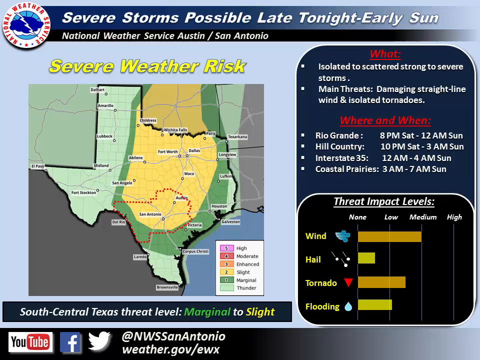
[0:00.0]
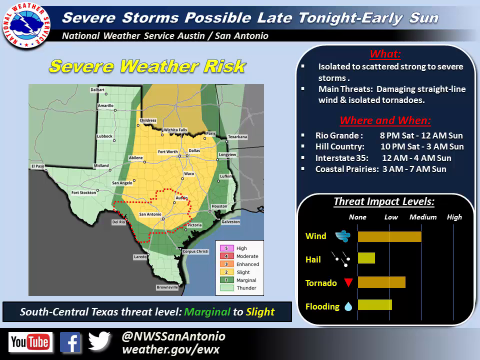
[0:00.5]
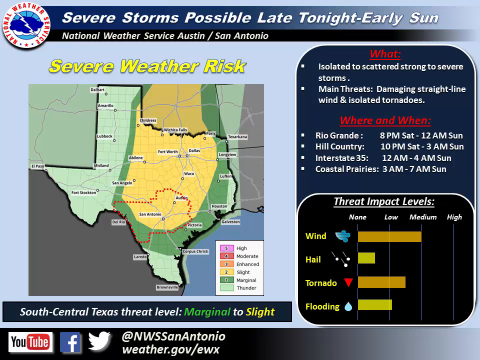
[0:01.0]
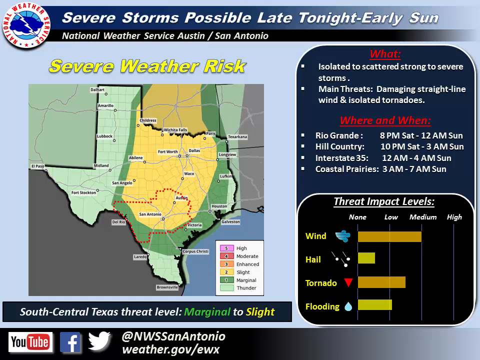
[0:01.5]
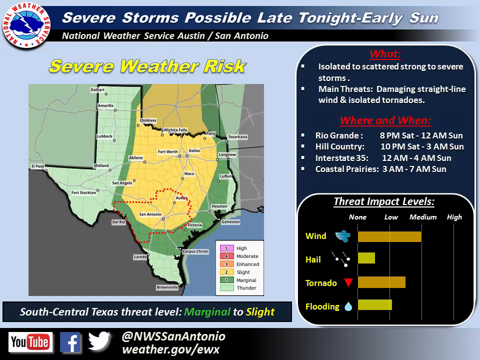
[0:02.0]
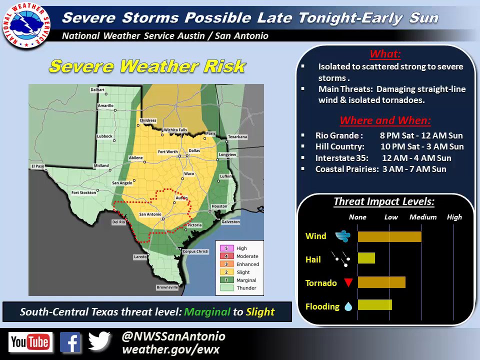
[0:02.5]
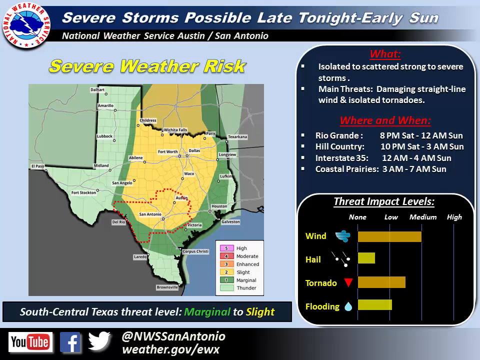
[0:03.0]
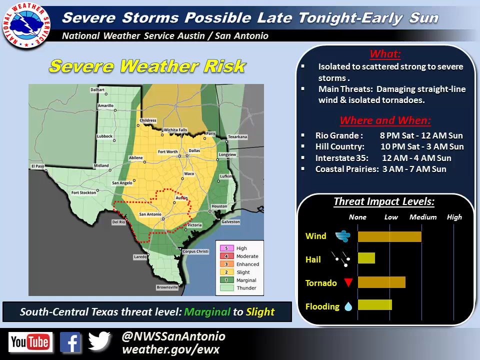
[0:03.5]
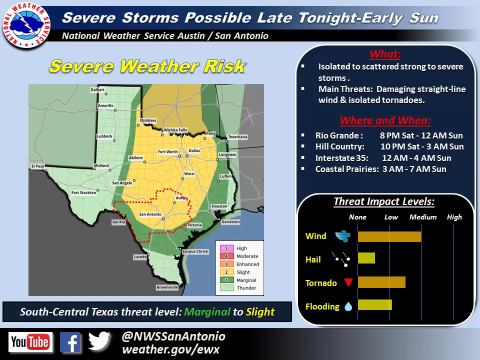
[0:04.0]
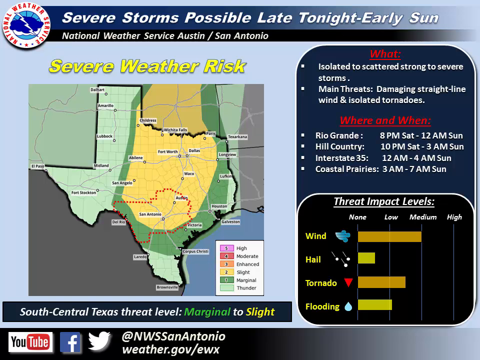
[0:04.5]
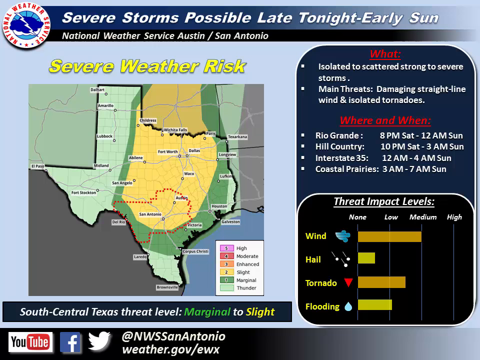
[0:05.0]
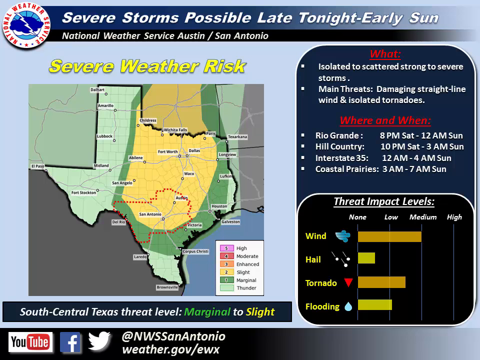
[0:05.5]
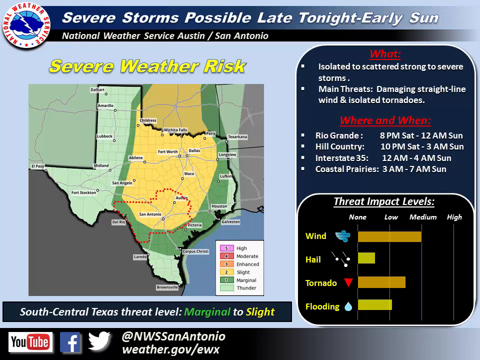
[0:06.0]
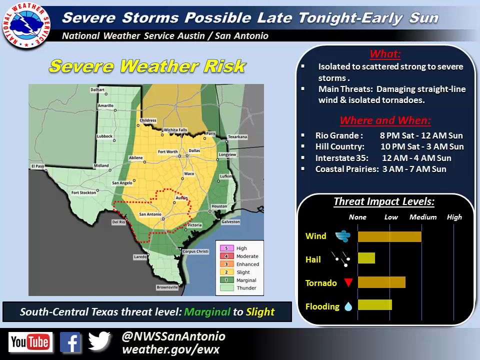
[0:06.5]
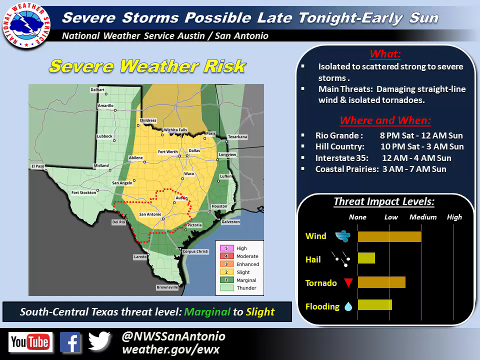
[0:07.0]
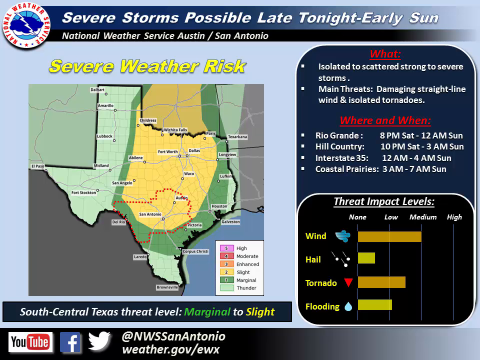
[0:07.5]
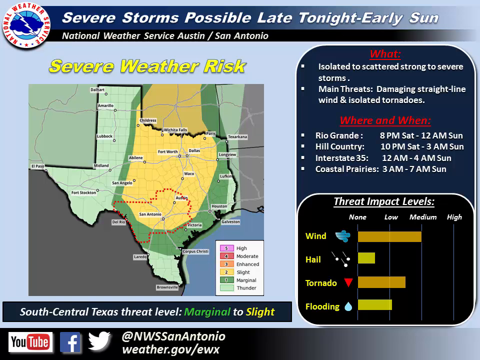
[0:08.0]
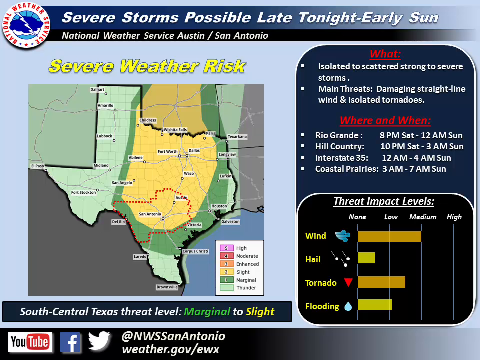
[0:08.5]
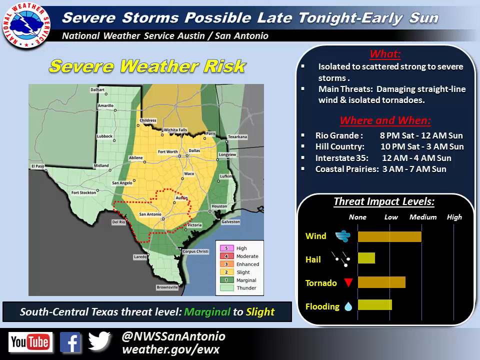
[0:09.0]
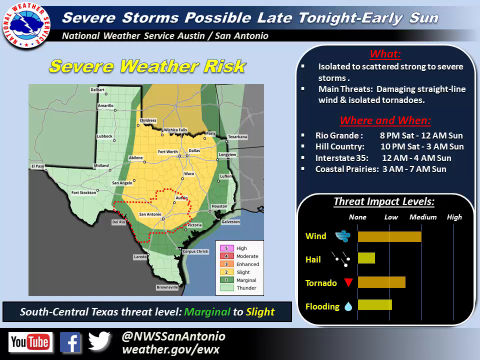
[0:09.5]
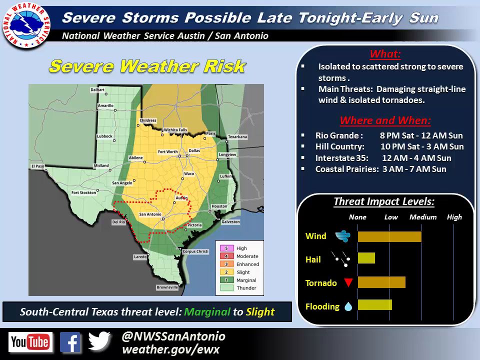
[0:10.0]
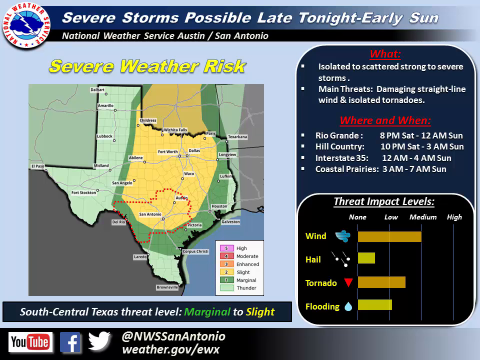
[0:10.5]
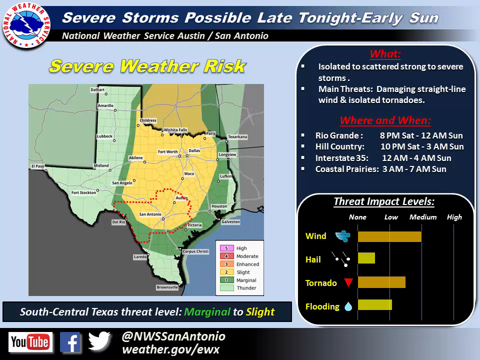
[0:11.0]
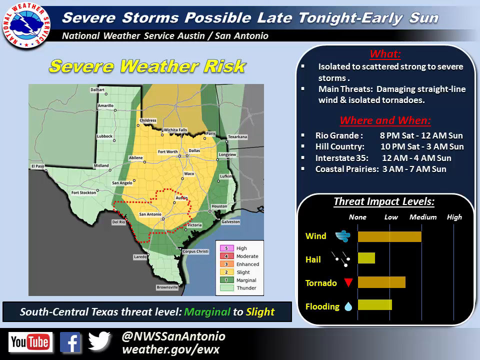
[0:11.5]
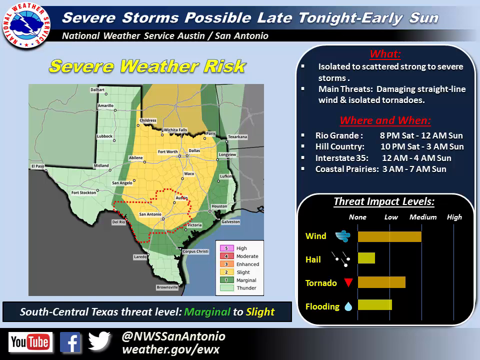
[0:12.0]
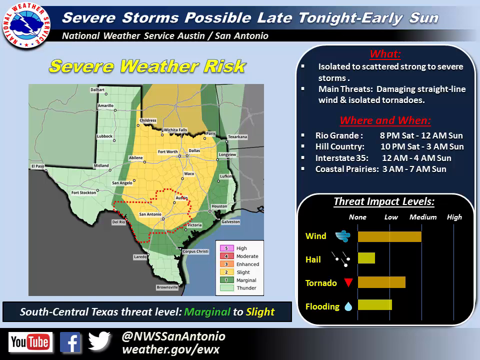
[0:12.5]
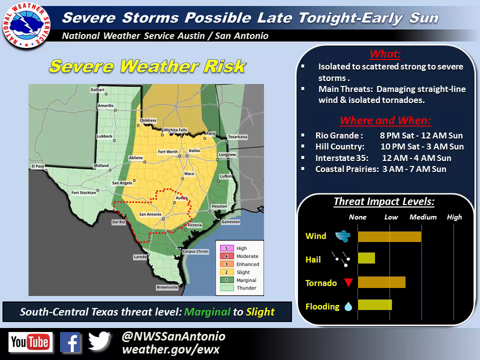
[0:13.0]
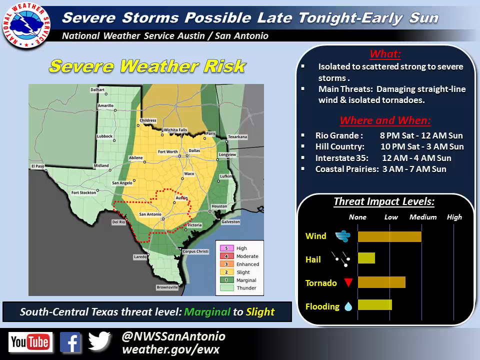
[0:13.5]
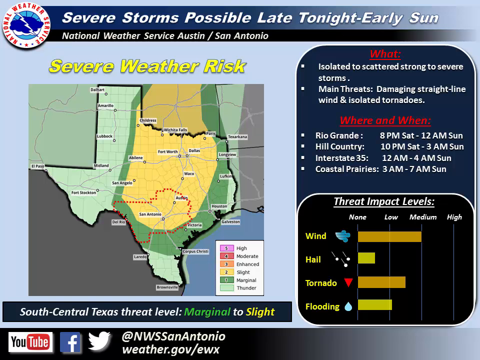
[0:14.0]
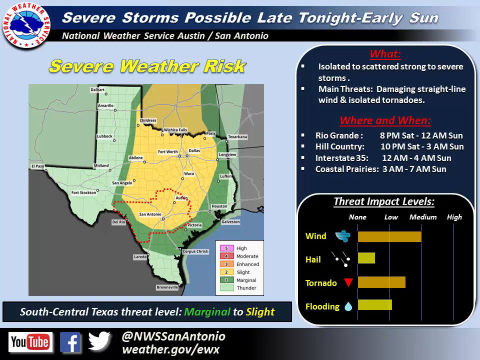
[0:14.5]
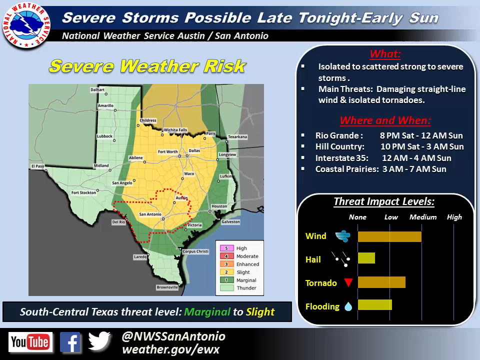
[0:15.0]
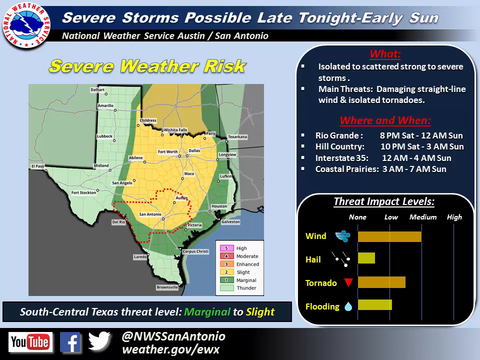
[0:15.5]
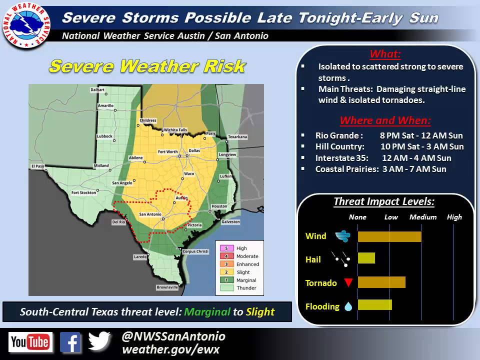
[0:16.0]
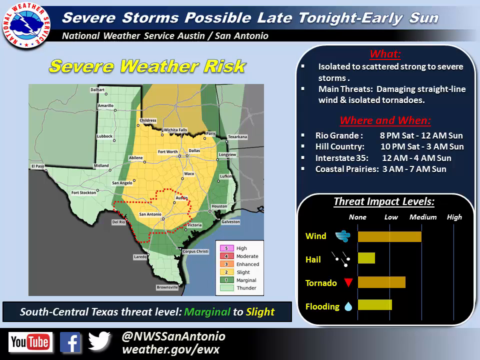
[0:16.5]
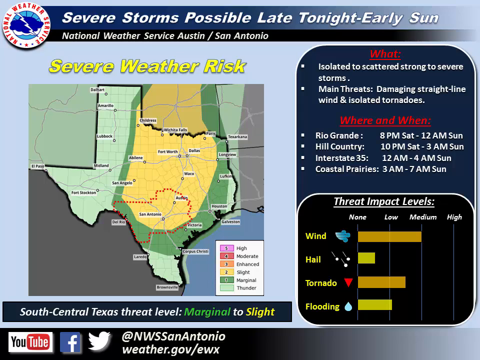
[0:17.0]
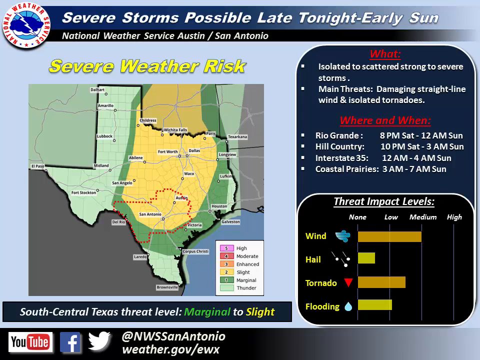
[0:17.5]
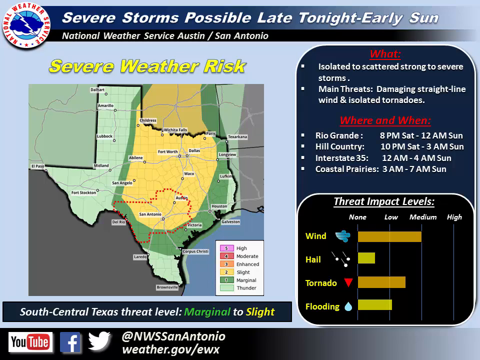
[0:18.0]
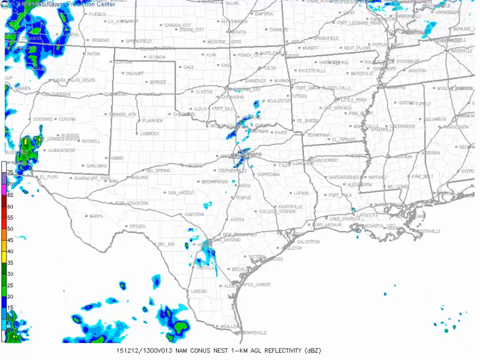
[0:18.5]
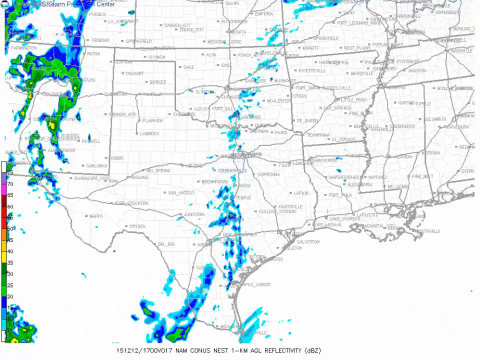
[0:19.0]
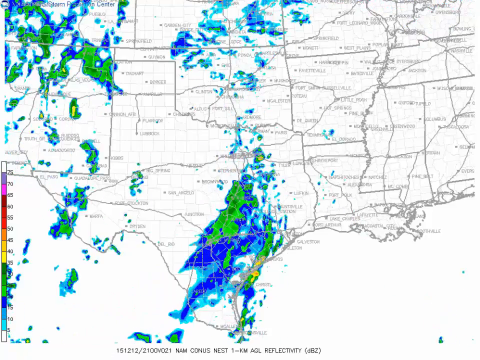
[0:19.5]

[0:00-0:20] A YouTube channel displays the heading "Severe storms possible late tonight, early" along with a map headed "severe weather risk". The channel is called National Weather Service Austin/San Antonio. The map has different color shades: green, light green, yellow, some red dots, black and grey. On the right side of the screen is a phone shape containing the question "what" in red, answered below by bullets: "Isolated to scattered strong to severe storms" and "main threats damaging straight line, wind and isolated tornadoes". Further questions, "where" and "when", are also answered with bullets: "Rio Grande 8pm Saturday to 12am Sunday", a second entry for "10pm Saturday to 3am Sunday", "Interstate 35" at "12am to 4am Sunday", and "coastal prairies" at "3am to 7am". Below that, a rectangle with curved corners reads "threat impact levels" above a bar chart recording the impact levels of the storm.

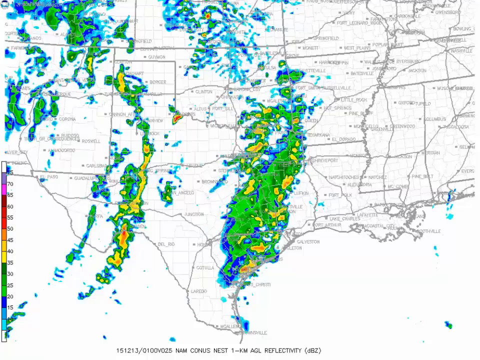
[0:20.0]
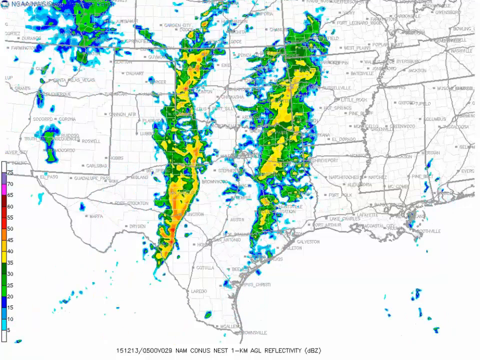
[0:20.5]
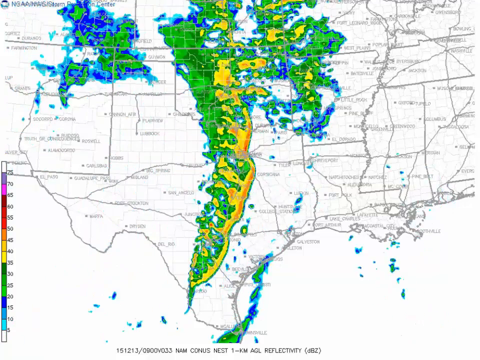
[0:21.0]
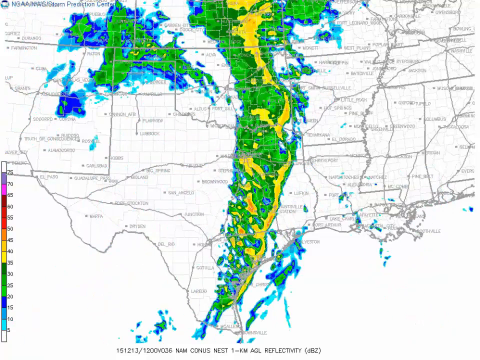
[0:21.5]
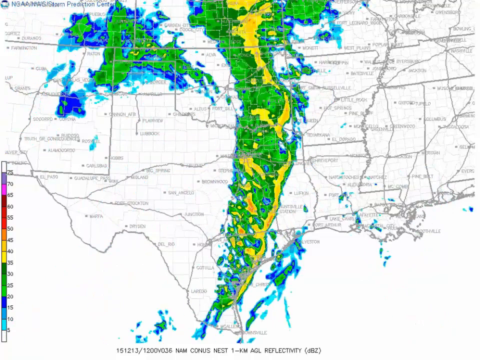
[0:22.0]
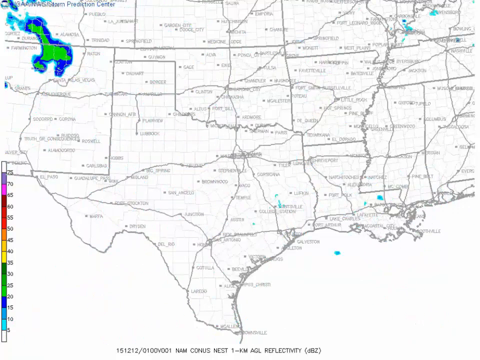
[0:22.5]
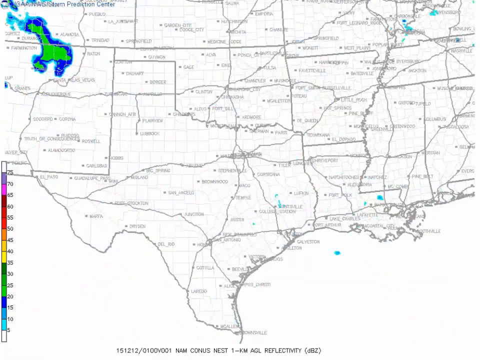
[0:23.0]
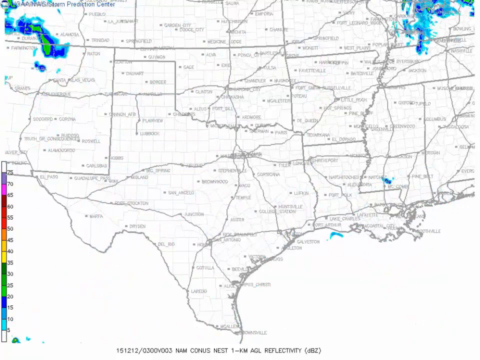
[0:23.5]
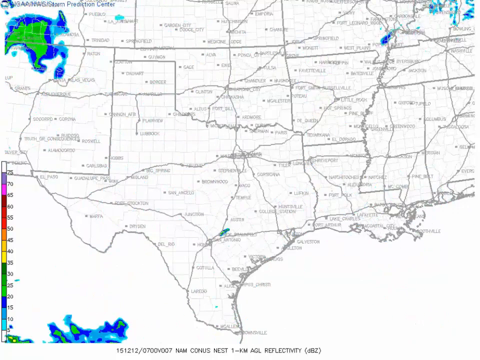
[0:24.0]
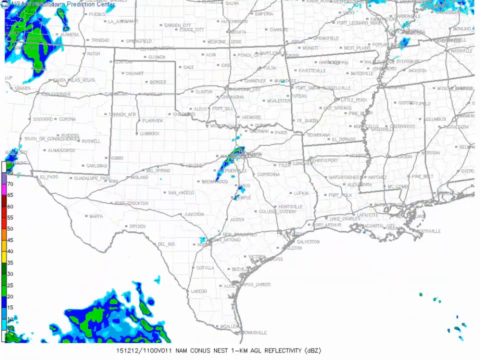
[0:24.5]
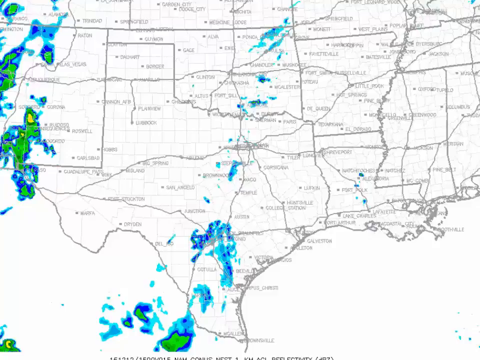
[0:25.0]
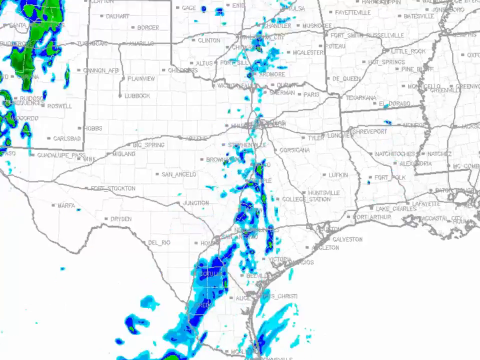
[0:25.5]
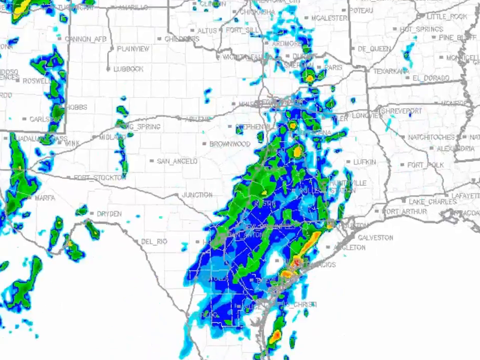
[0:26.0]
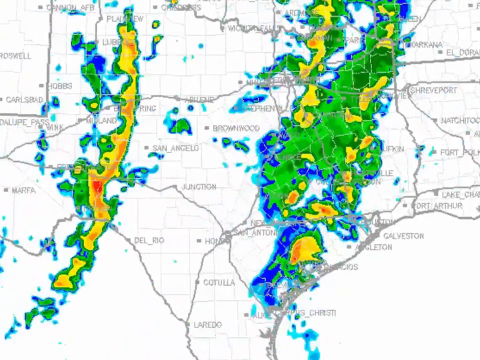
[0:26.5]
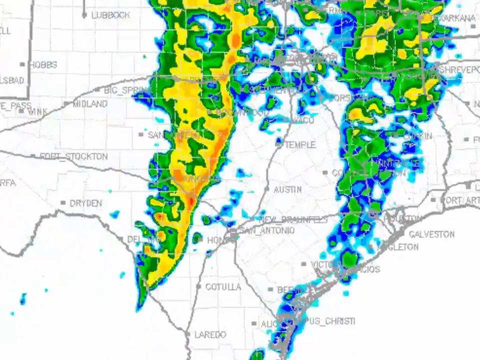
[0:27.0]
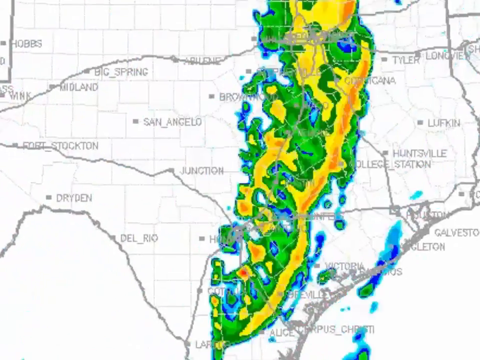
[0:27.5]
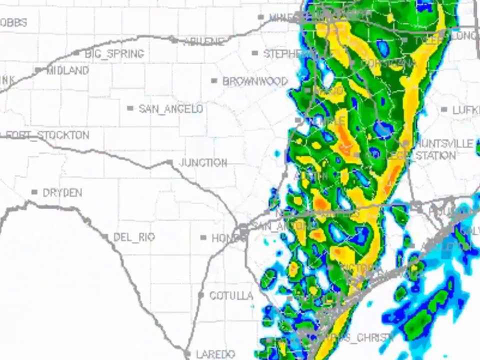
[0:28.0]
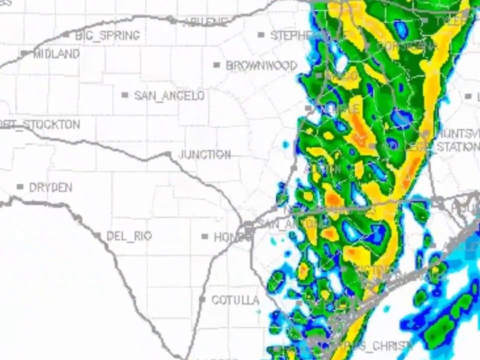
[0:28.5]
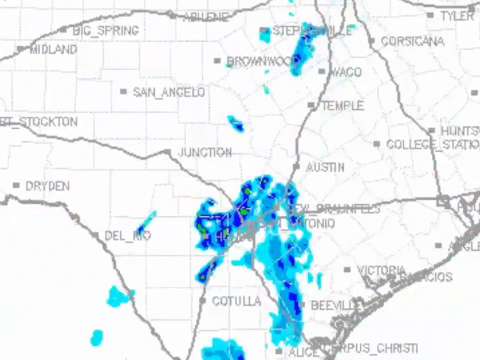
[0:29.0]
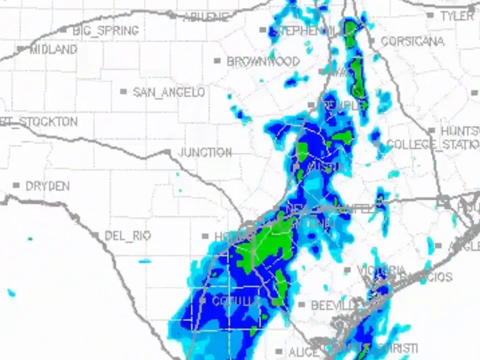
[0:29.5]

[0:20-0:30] Random colors and shapes mixed together move at very high speed in front of a map, some from left to right and others rising from the bottom to the top. The map is being zoomed out so the places on it can be seen clearly. A key in the bottom left corner shows the different colors used by the moving shapes, with numbers against each color. The map is gray, and the place names are also written in gray.